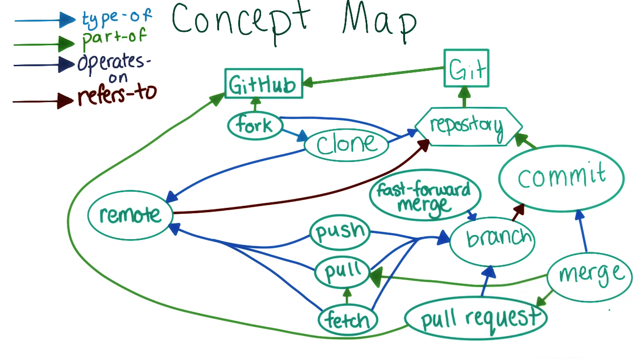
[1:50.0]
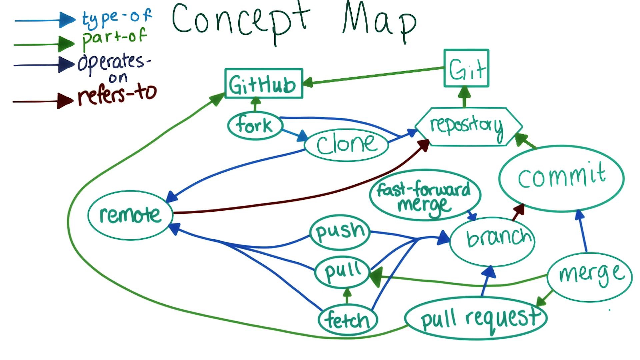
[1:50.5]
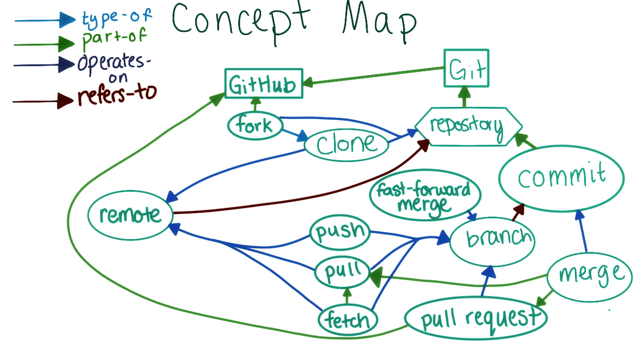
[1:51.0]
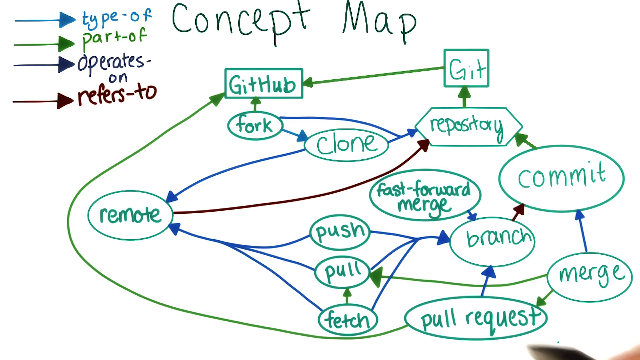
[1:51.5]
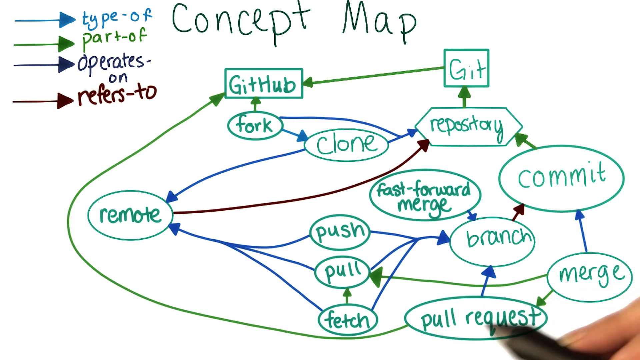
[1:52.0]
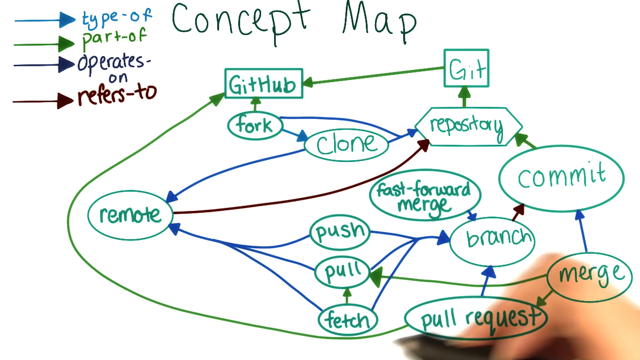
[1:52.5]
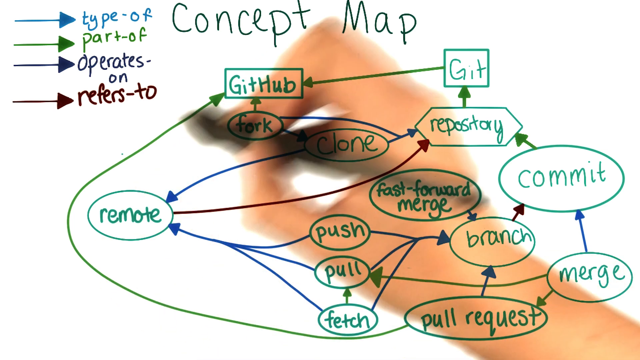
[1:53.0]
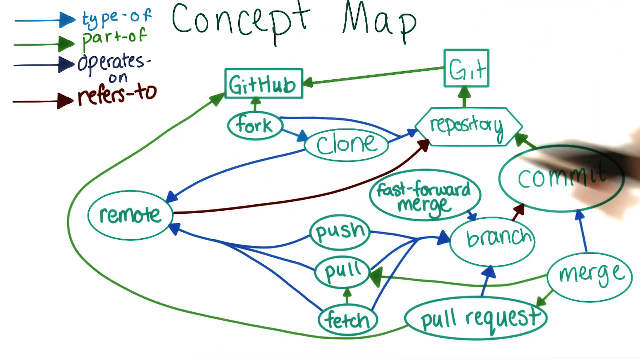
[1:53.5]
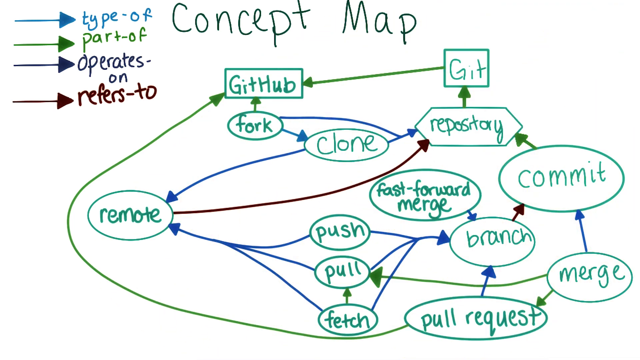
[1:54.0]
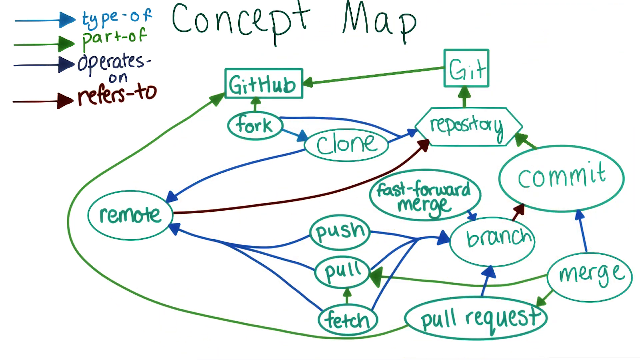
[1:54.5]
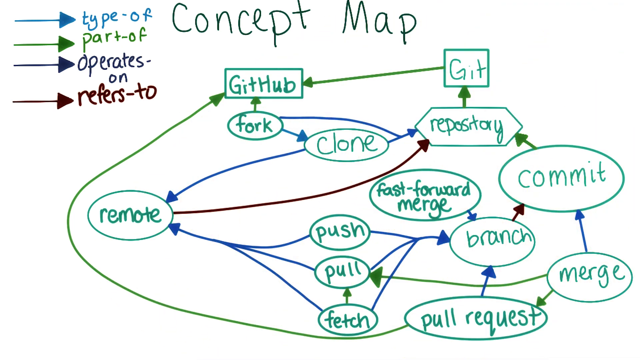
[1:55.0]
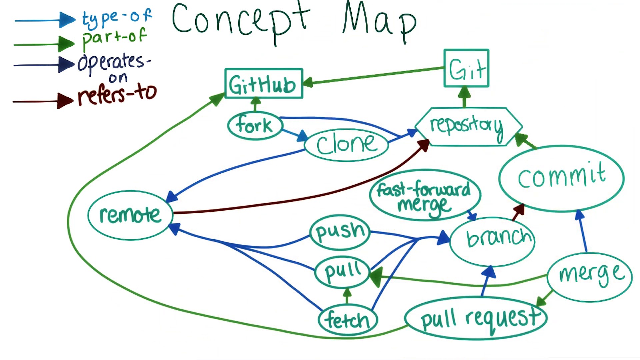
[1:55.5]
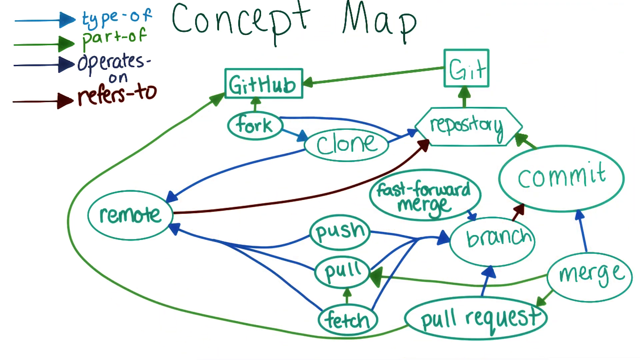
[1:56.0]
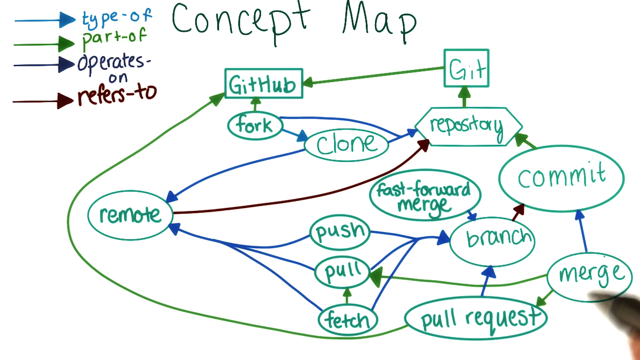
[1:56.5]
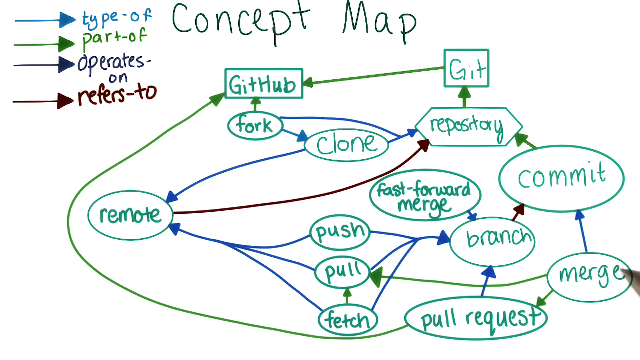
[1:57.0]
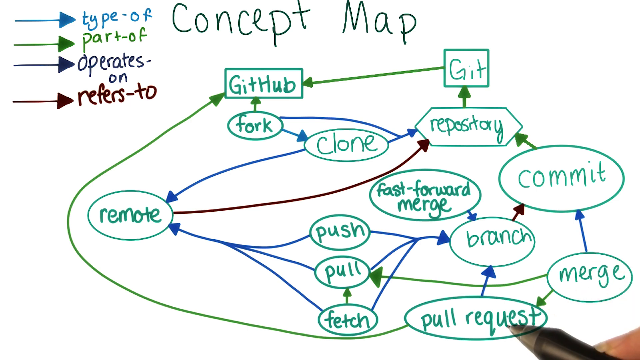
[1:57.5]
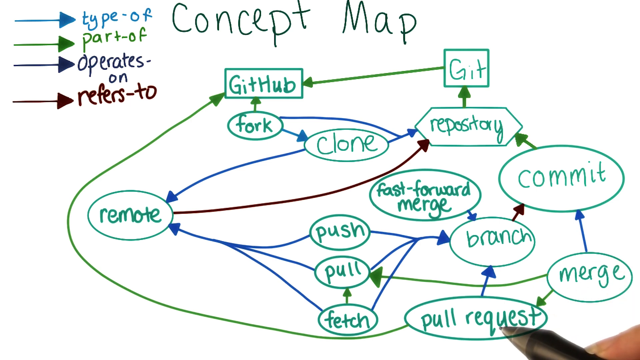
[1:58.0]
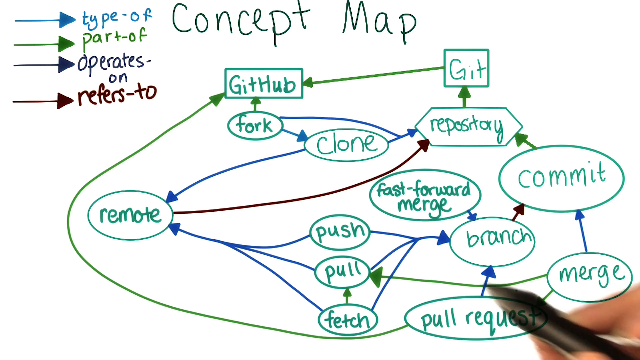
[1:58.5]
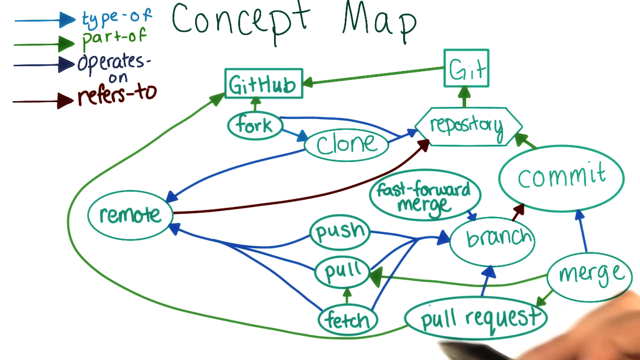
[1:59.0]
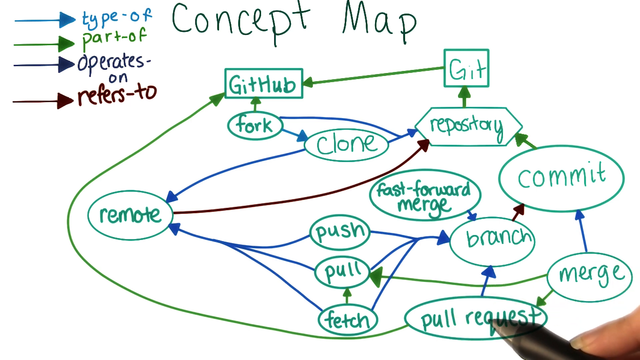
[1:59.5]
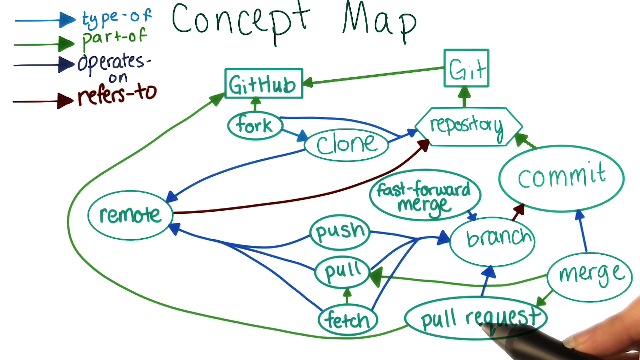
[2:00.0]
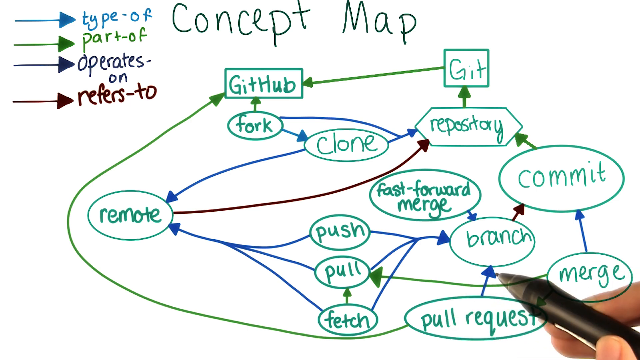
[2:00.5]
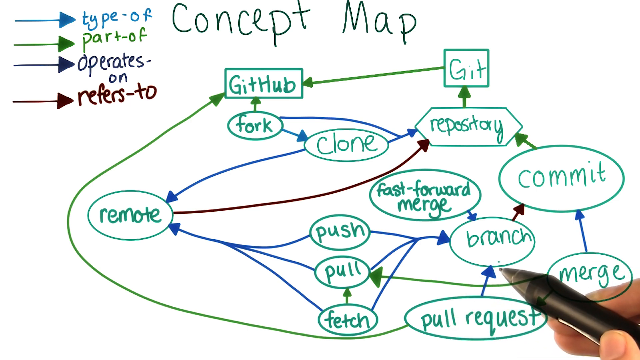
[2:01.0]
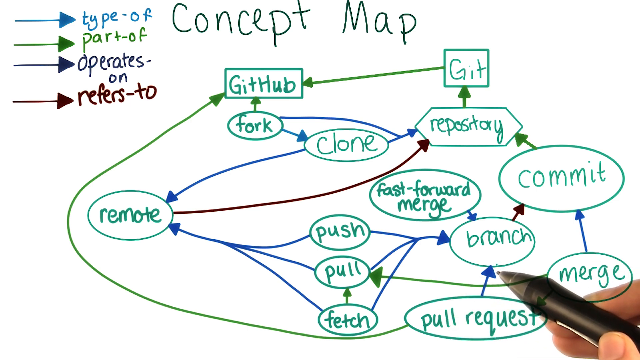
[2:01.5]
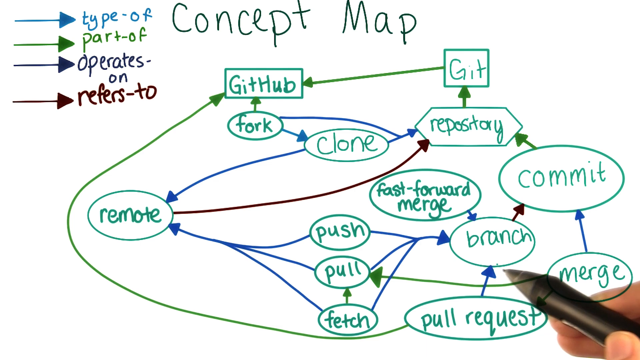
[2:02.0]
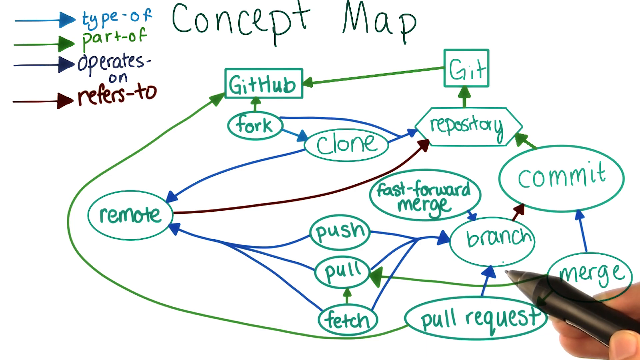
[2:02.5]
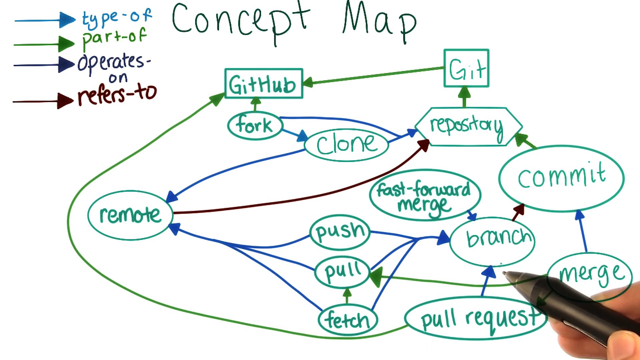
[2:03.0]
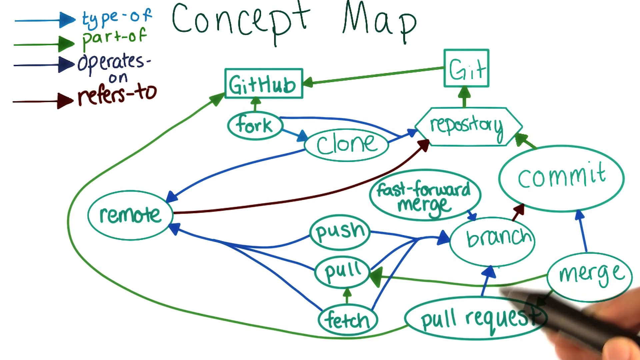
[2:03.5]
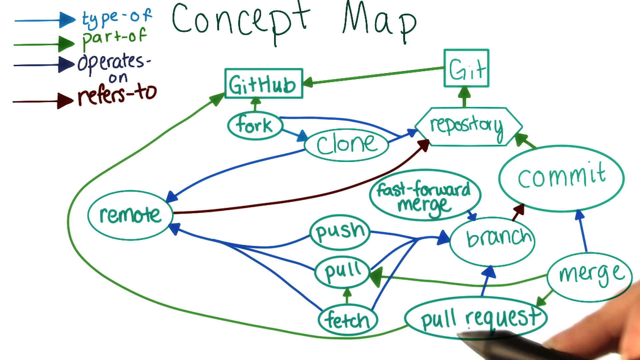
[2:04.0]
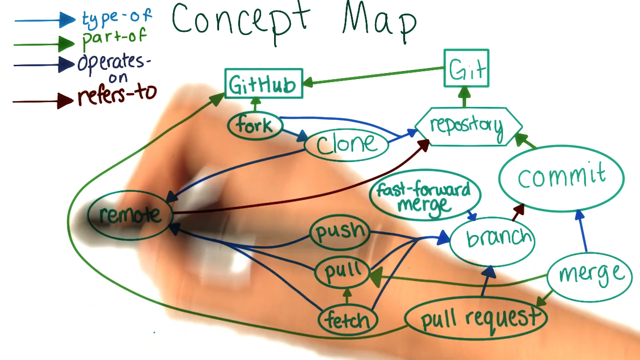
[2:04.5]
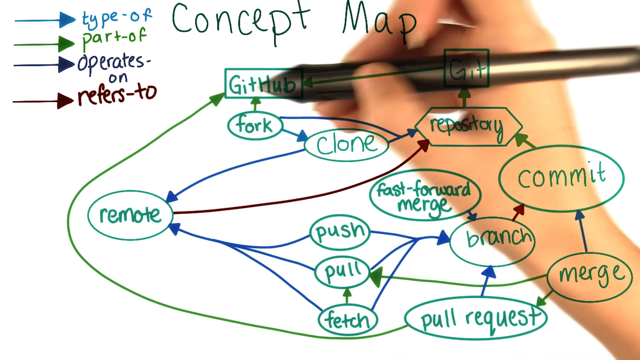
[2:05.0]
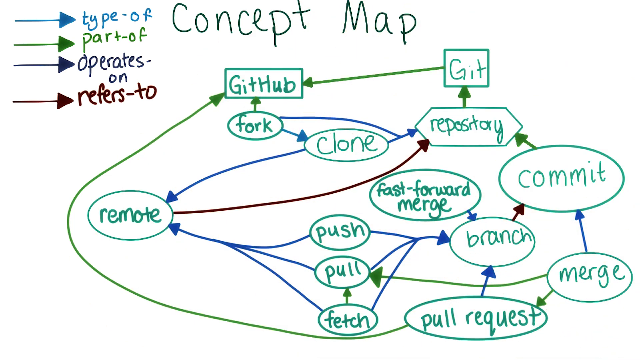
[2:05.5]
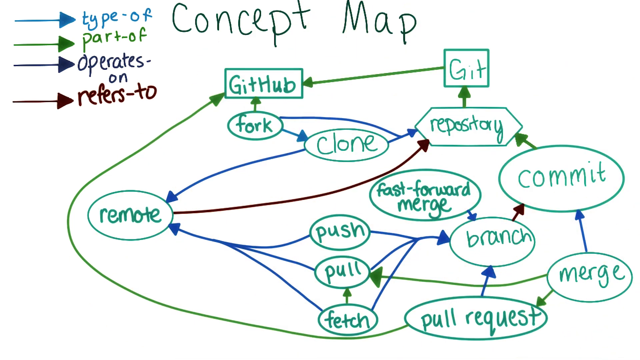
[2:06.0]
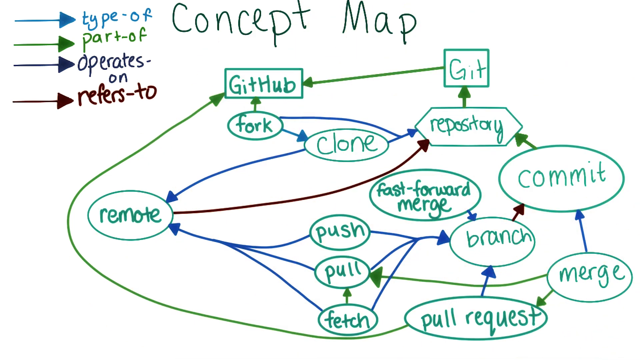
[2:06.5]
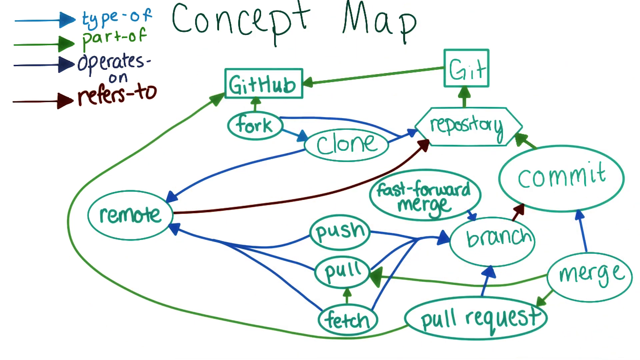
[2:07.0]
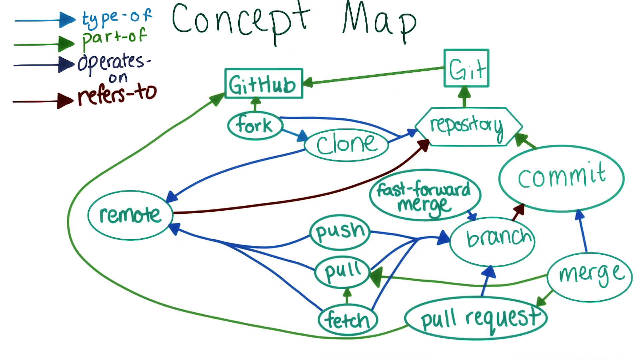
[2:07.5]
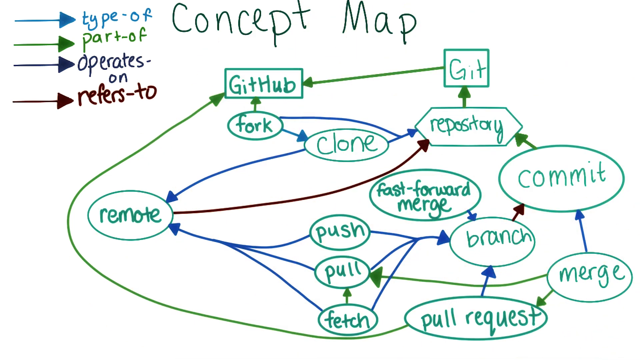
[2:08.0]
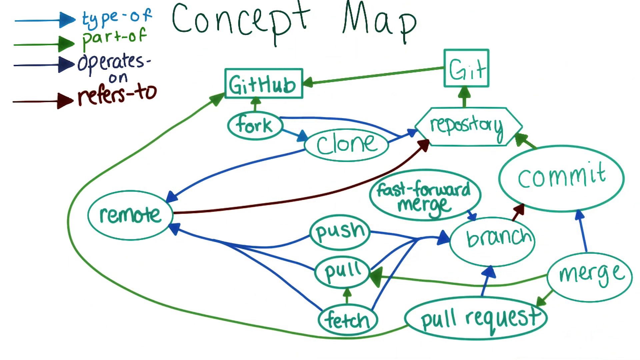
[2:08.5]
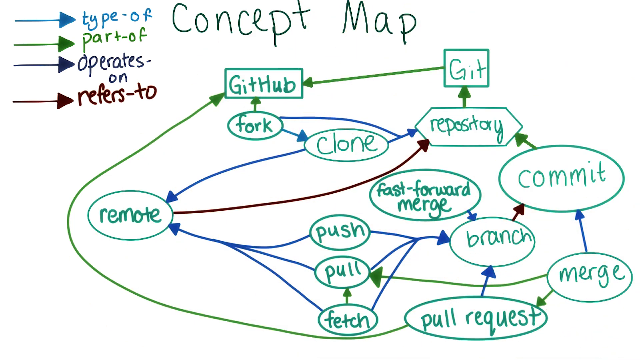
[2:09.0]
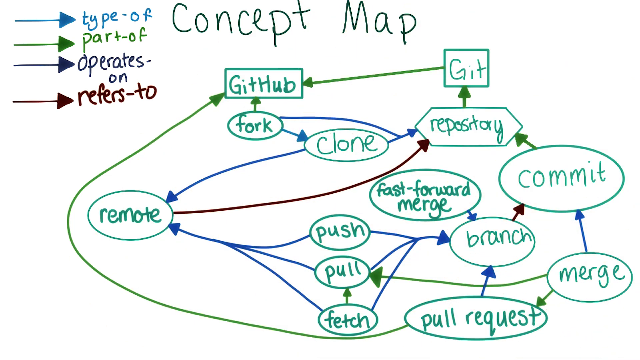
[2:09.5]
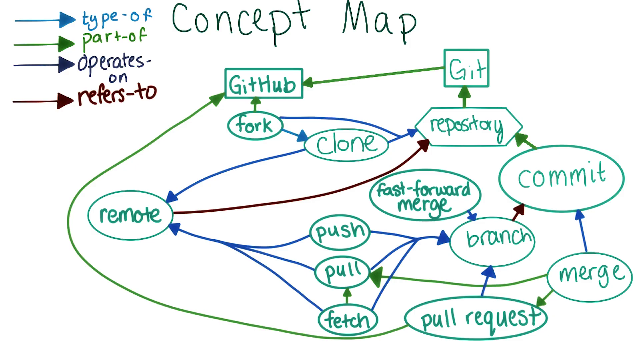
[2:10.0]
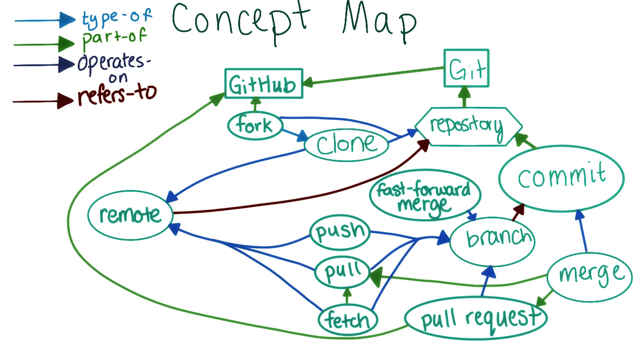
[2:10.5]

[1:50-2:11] A white screen shows "concept map" in black letters. On the left are four arrows: a blue one labeled "type of," a green one labeled "part of," a dark blue one labeled "operates on," and a brown one labeled "refers to." There are a number of circles and squares with different words in them, and arrows going between them: a green arrow from git to github, an arrow from github to fork, a blue arrow from fork to clone, a blue arrow from clone to repository, a green arrow from git to repository, and a blue arrow from merge to commit. The woman holds a black pen between her thumb and index finger, pretends to make circles around different objects, and points from one item to another, following the way the arrows connect things. There are some words on the right; when she circles an empty area, a word from the right goes into the empty spot.